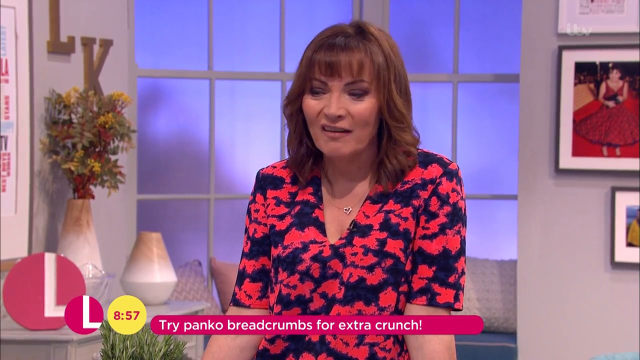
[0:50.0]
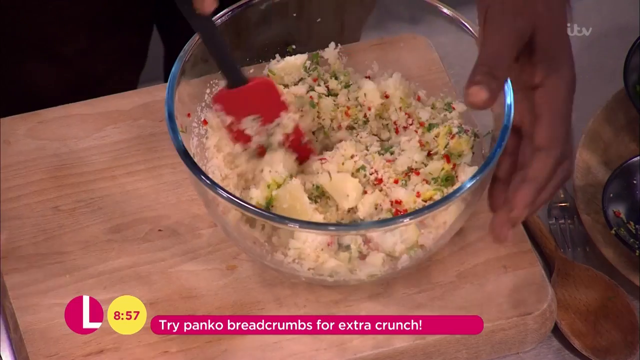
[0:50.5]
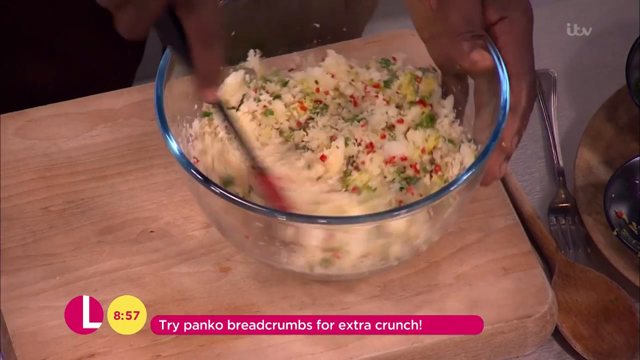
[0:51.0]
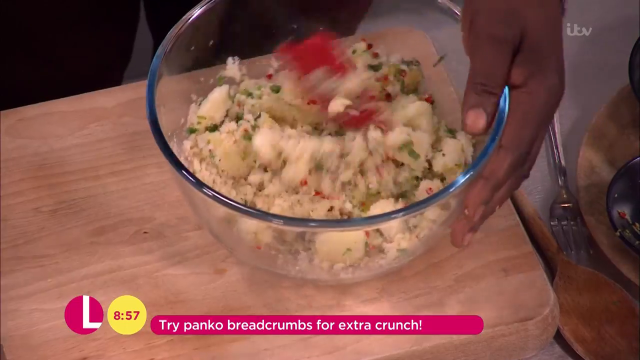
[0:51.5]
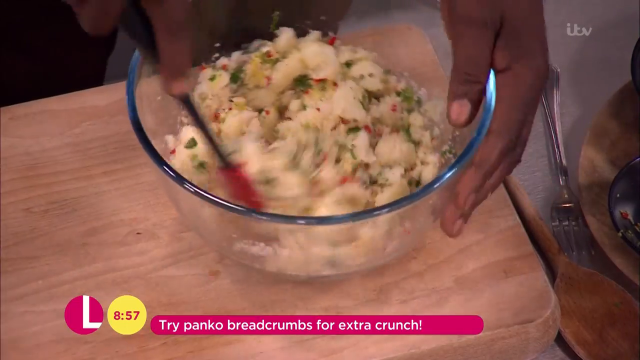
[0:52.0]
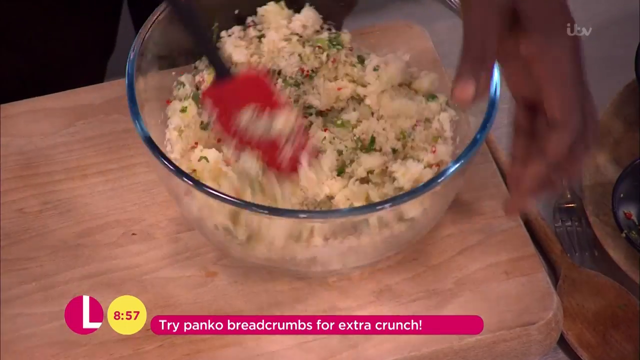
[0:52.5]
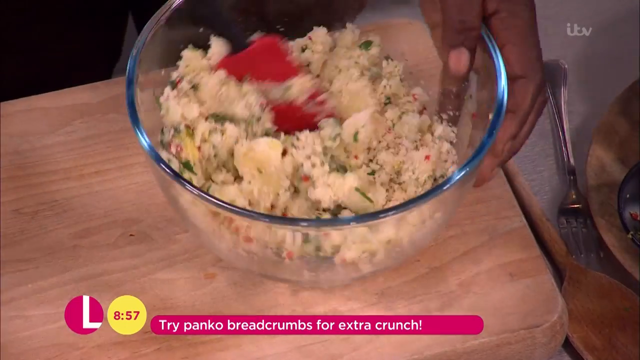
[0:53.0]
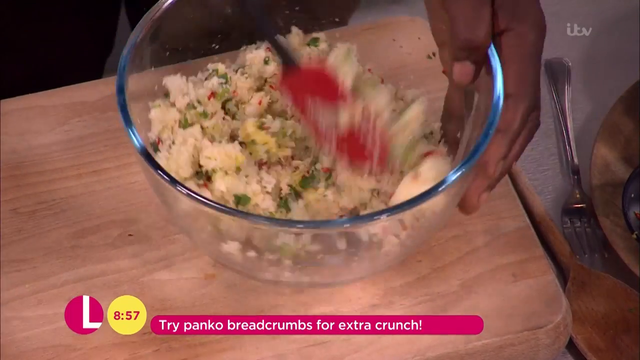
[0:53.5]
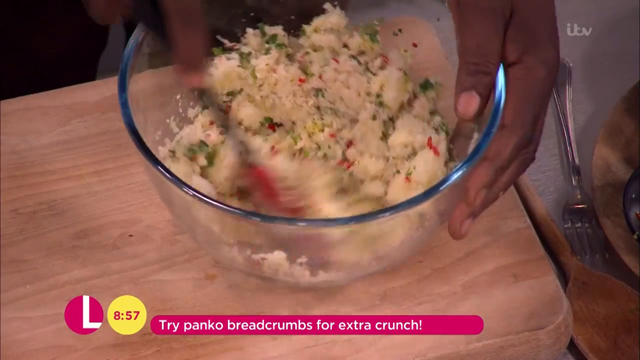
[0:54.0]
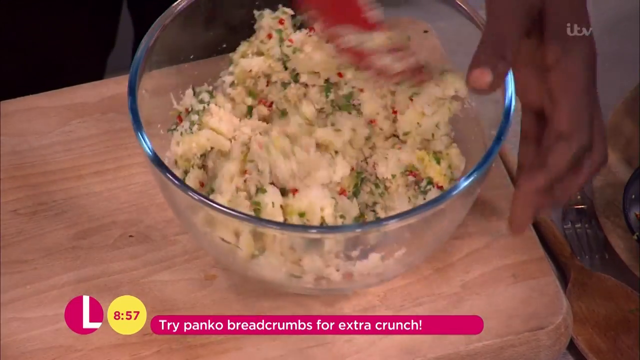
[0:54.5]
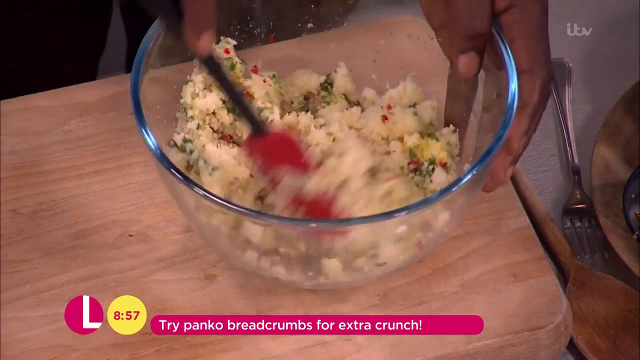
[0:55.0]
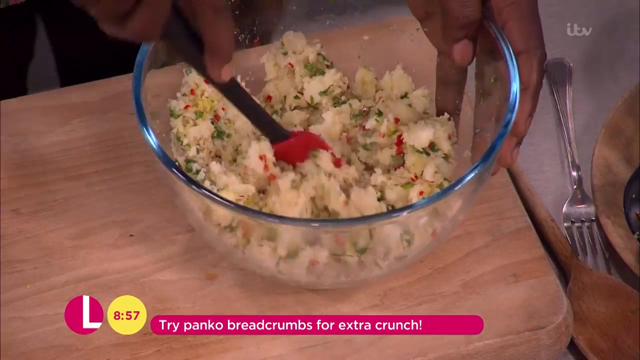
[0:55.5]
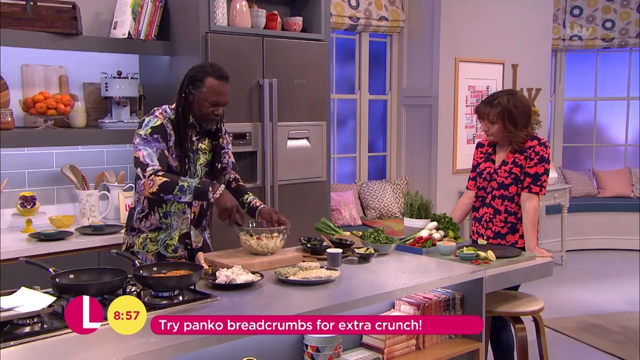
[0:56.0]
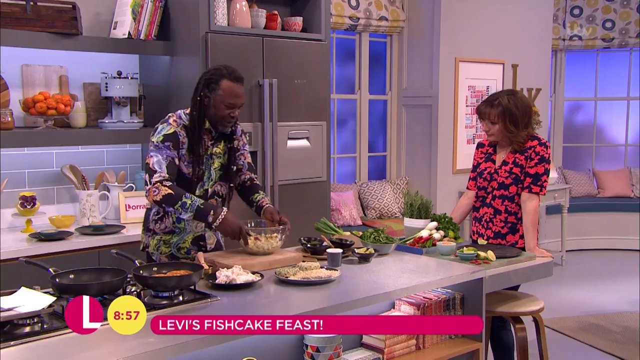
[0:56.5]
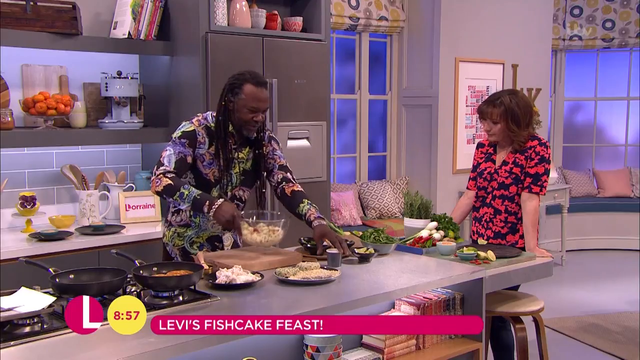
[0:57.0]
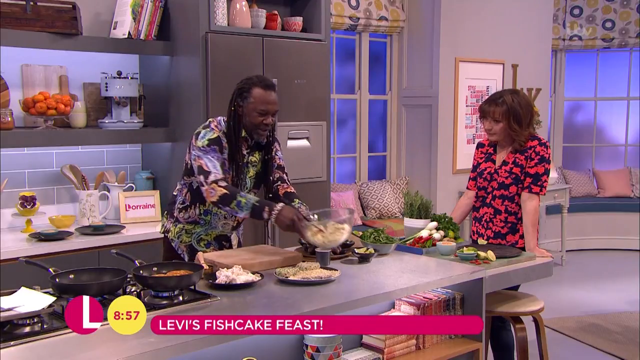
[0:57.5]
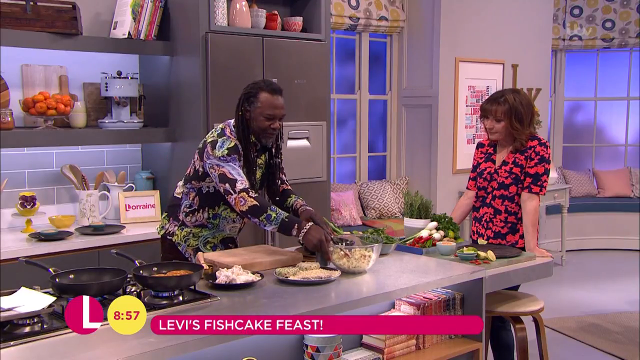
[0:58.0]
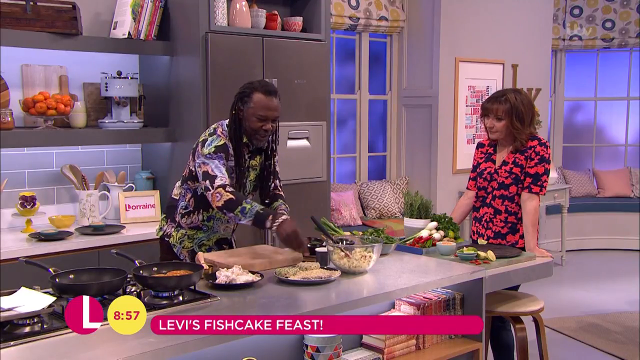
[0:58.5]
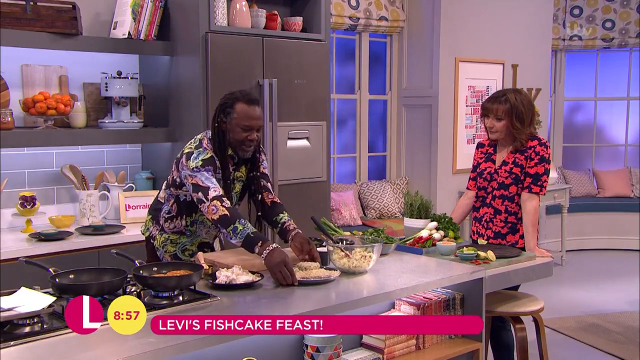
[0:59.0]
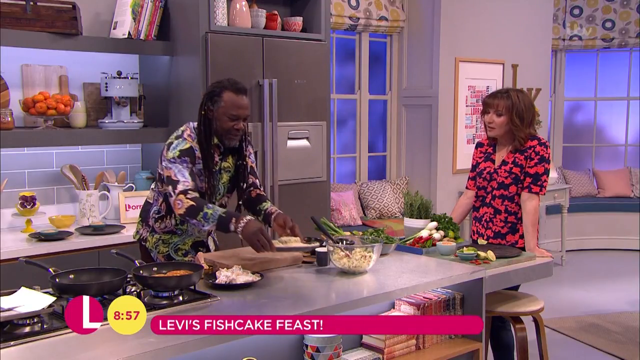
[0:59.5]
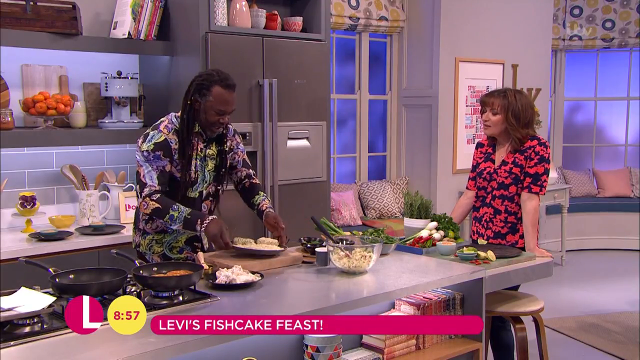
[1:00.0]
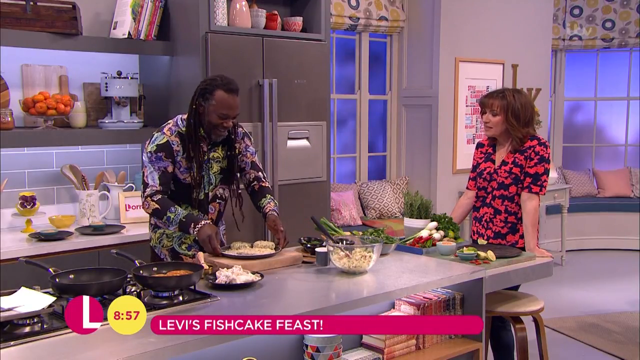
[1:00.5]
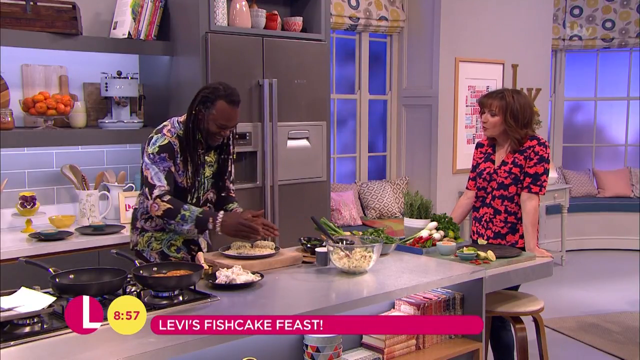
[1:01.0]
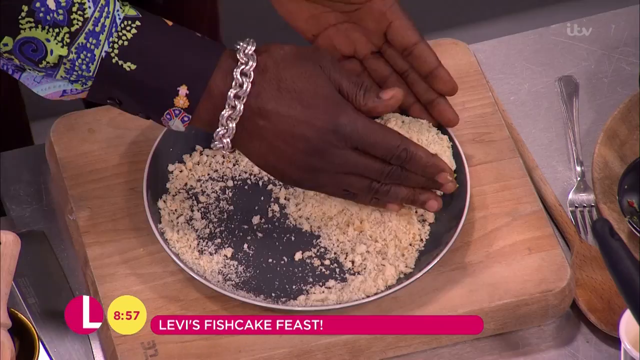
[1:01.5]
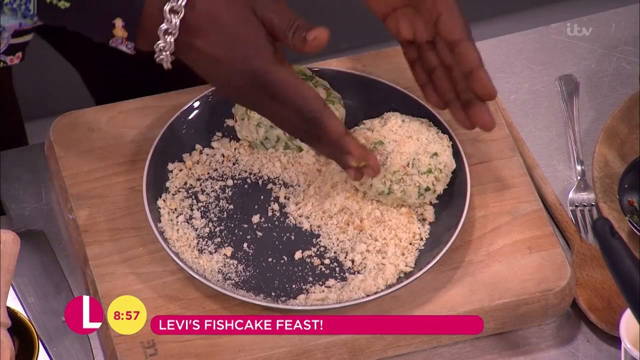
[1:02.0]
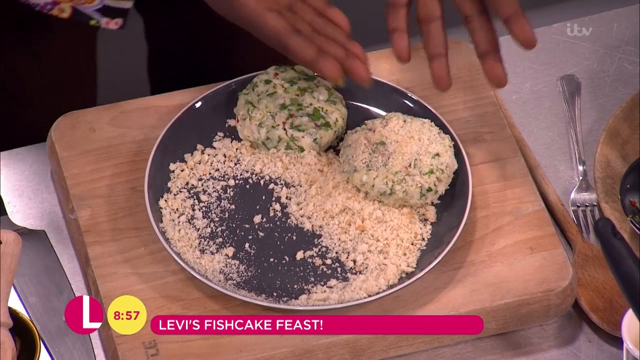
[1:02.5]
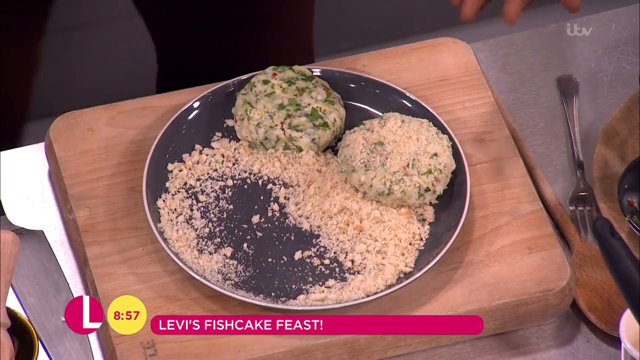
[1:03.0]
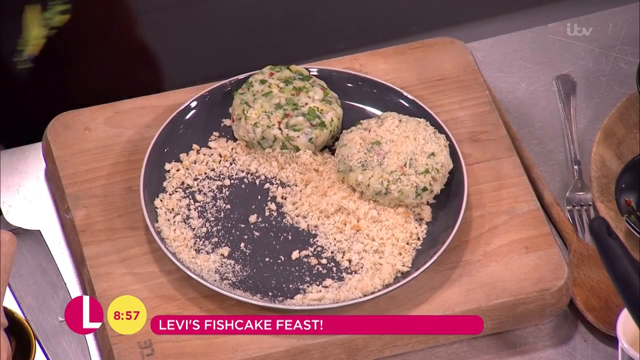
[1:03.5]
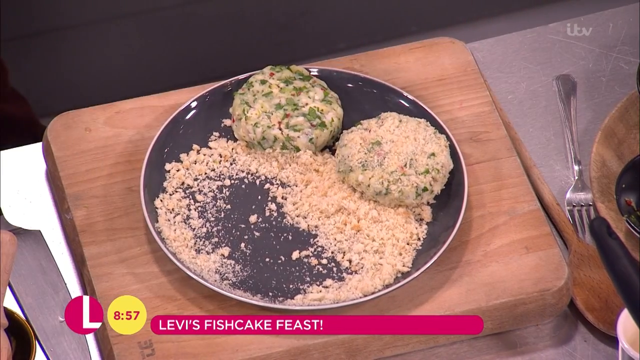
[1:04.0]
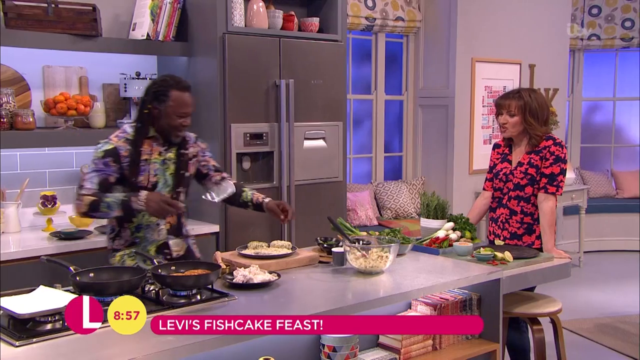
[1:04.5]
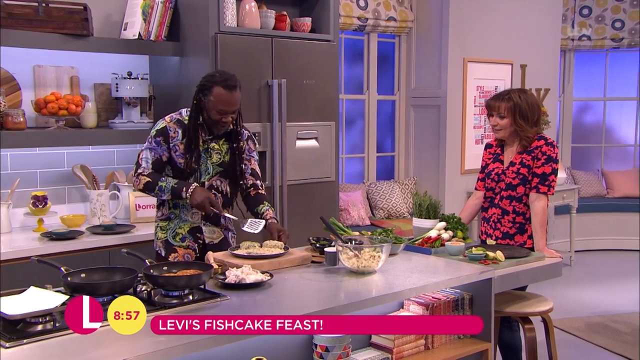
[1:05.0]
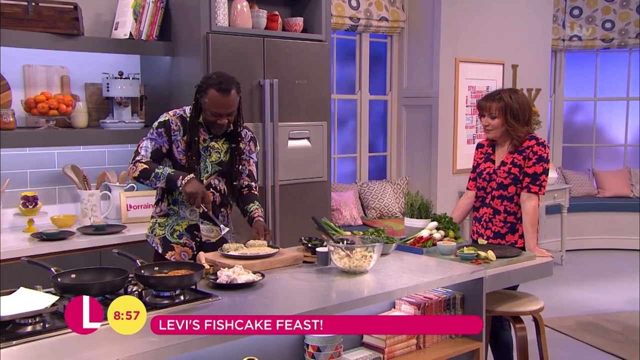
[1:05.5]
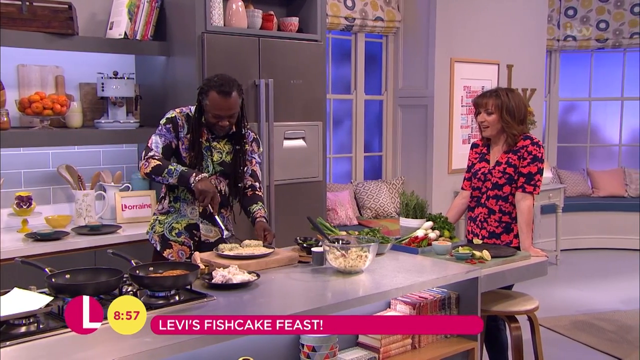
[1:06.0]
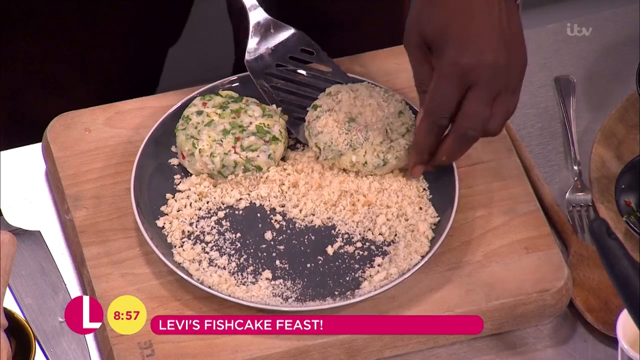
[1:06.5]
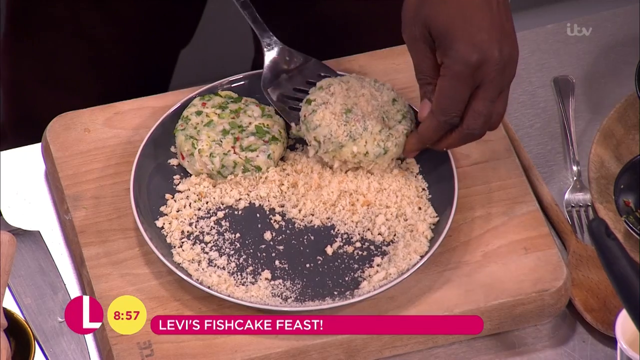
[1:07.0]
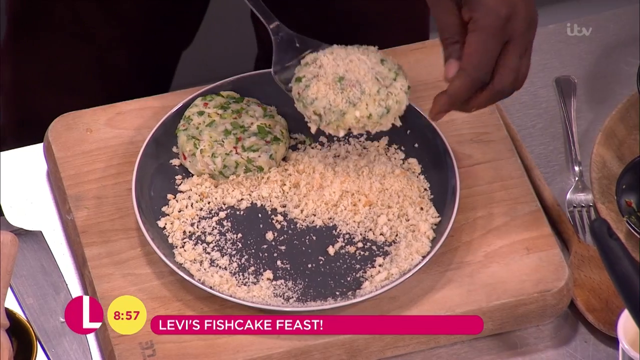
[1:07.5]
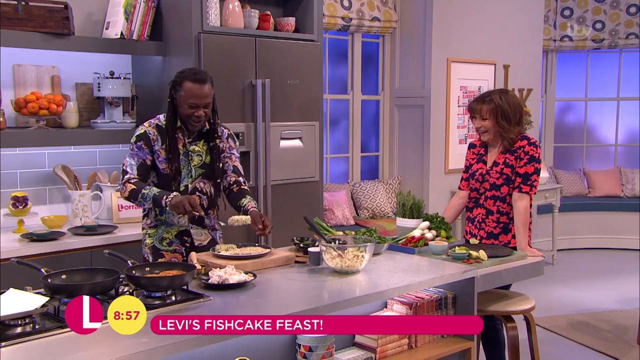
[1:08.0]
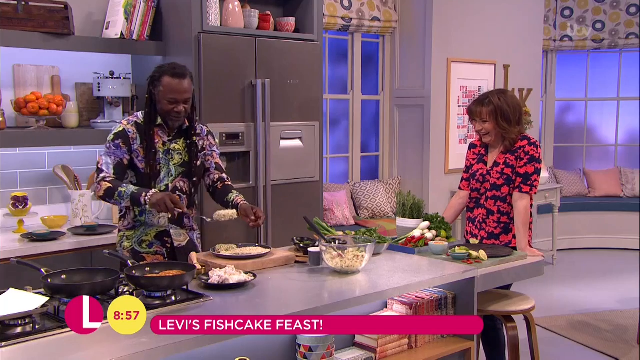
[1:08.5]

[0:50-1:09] A kitchen set for a live television cooking show holds two co-hosts. One is a white woman of about 60 with black-brown hair that comes to her shoulders and bangs at the front, wearing a small gold necklace with a hat pendant and a black and red floral shirt. She stands at the edge of the table with both hands placed on it, constantly chatting with the cook. The cook is a black man of about 60 to 65 with long black dreadlocks, wearing a long-sleeved multicoloured shirt. He is preparing fish cakes from dry, shredded boiled potatoes mixed with various herbs and spices including red chillies, boiled shredded hake fish, and what looks like a dressing. He adds panko breadcrumbs and vigorously mixes the ingredients into a ball, then shapes them into fish cakes and starts frying them.